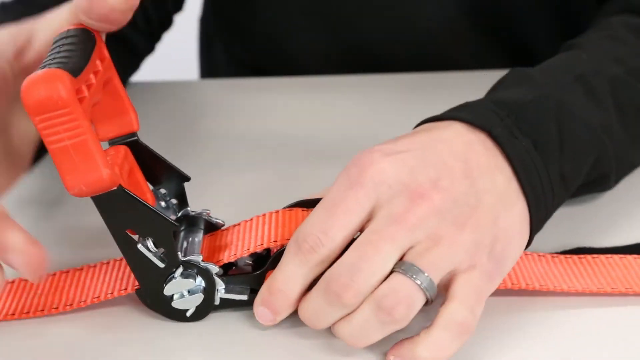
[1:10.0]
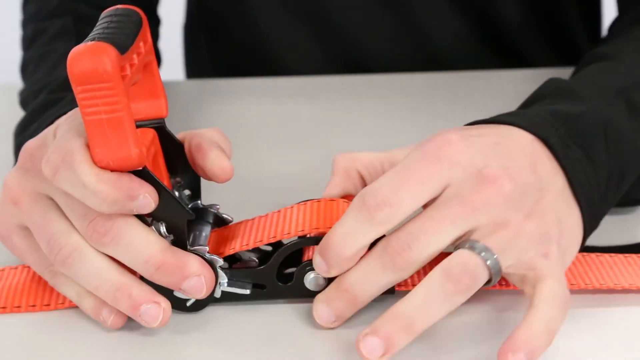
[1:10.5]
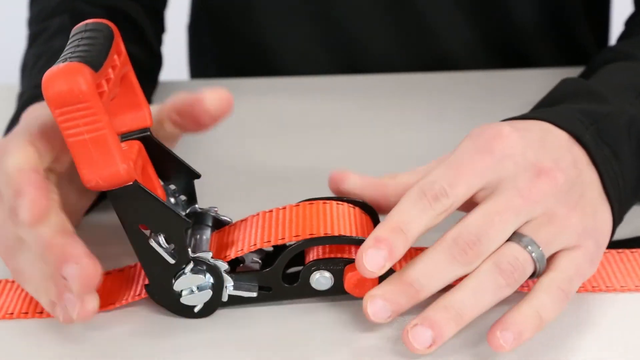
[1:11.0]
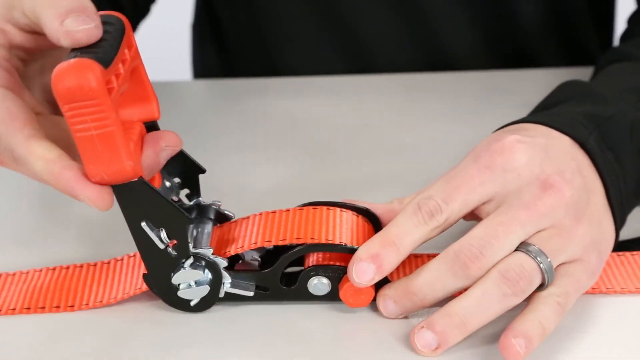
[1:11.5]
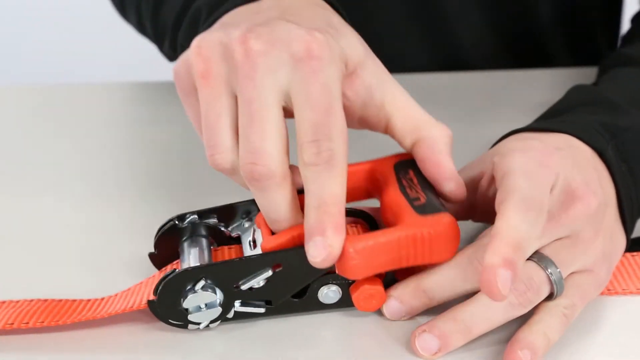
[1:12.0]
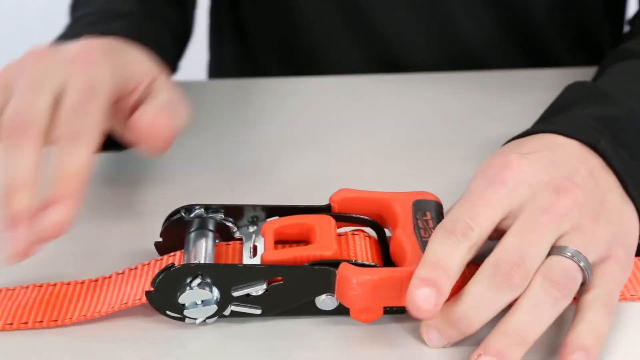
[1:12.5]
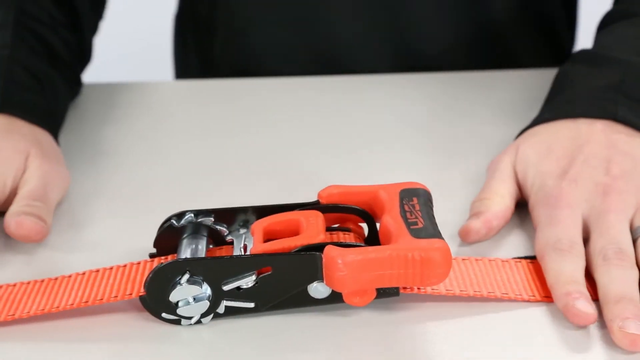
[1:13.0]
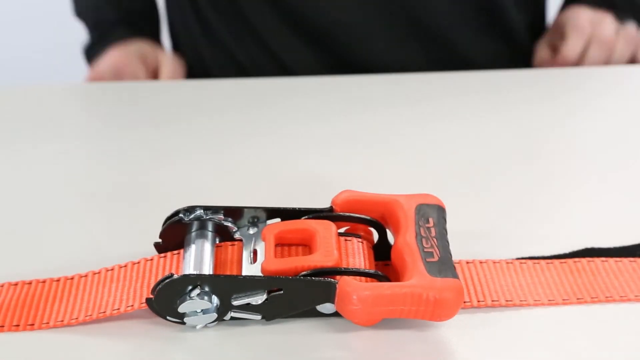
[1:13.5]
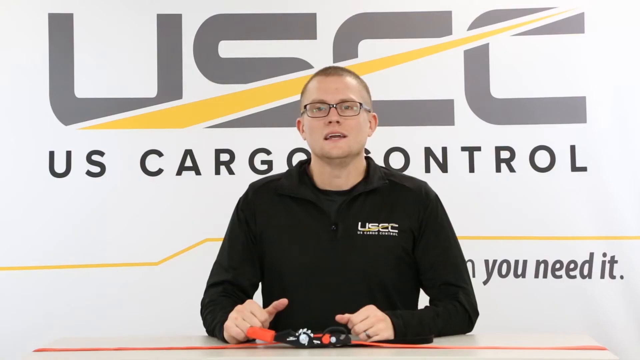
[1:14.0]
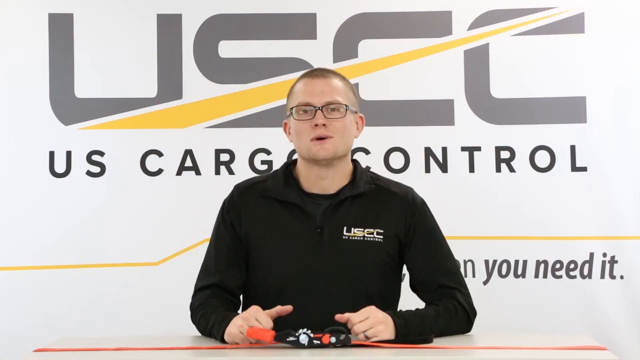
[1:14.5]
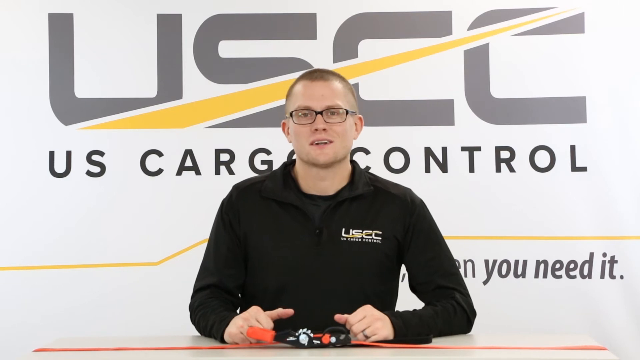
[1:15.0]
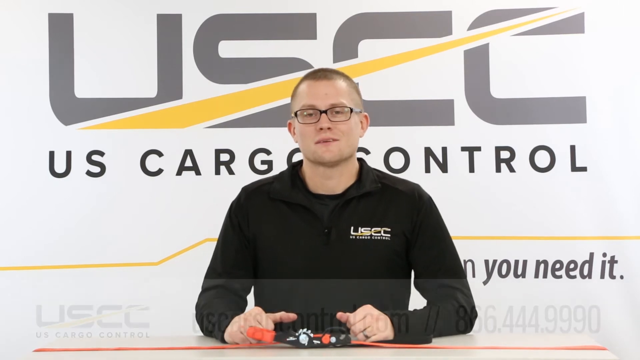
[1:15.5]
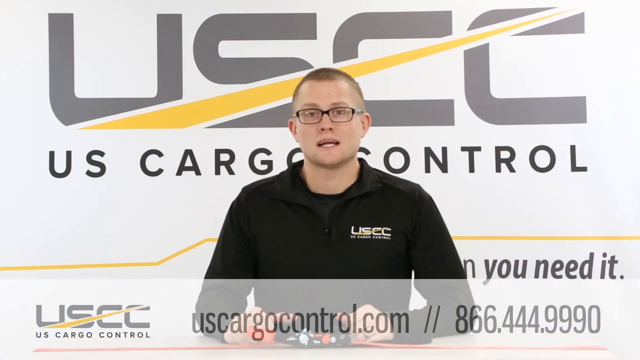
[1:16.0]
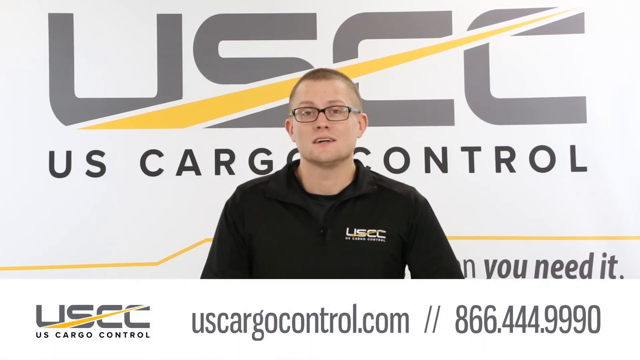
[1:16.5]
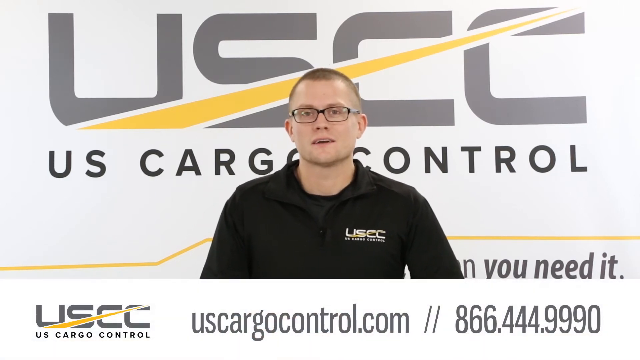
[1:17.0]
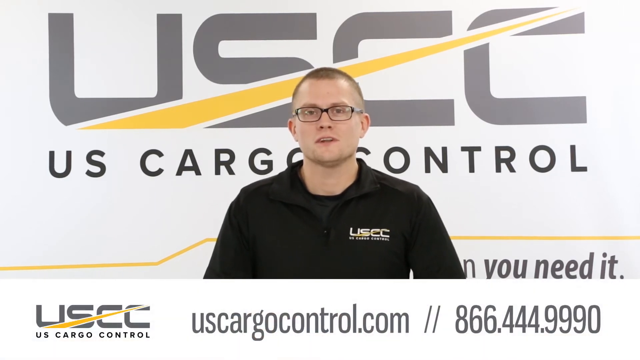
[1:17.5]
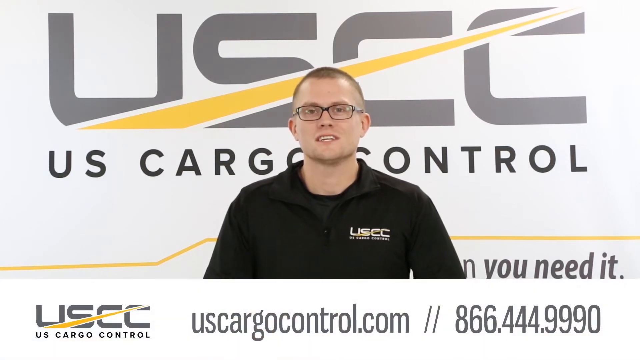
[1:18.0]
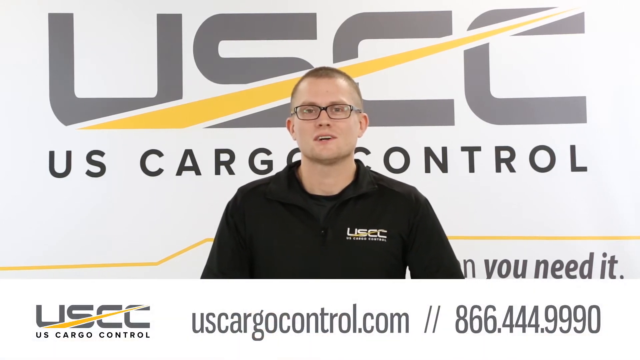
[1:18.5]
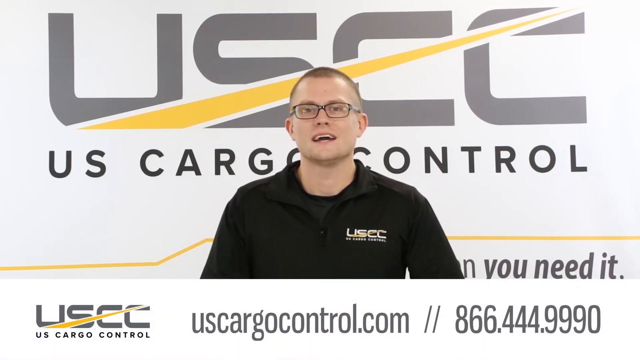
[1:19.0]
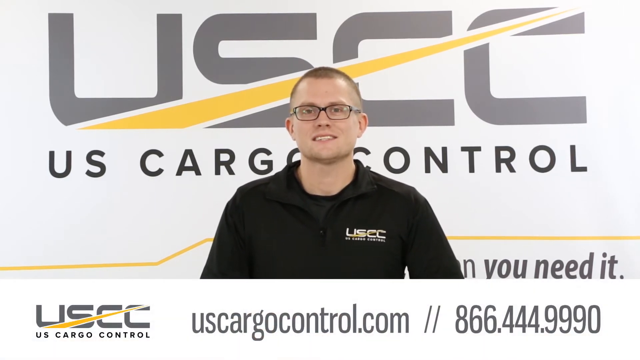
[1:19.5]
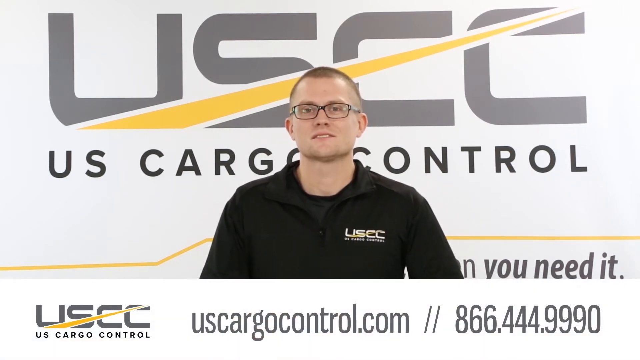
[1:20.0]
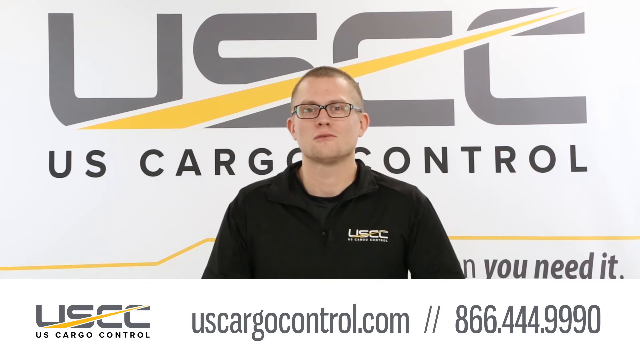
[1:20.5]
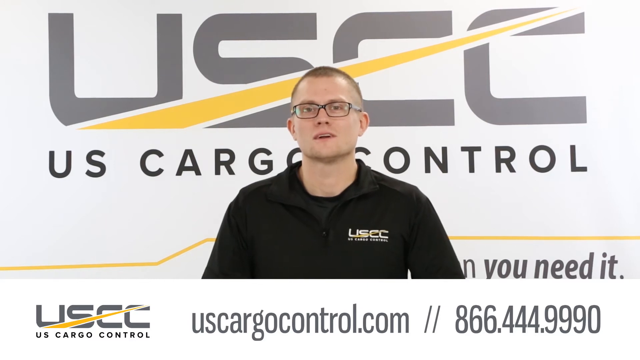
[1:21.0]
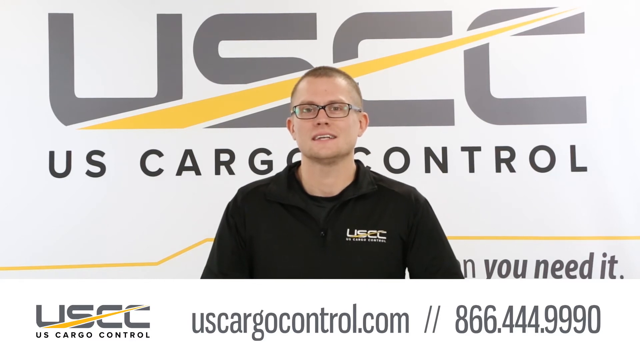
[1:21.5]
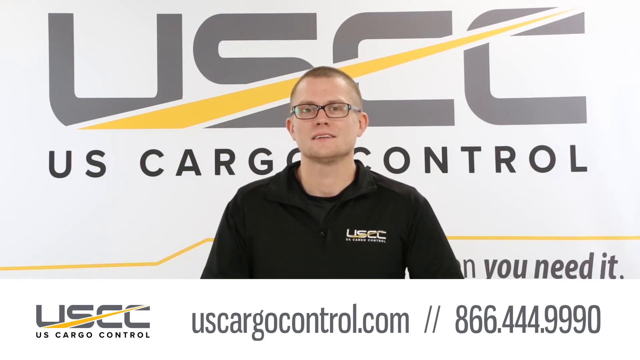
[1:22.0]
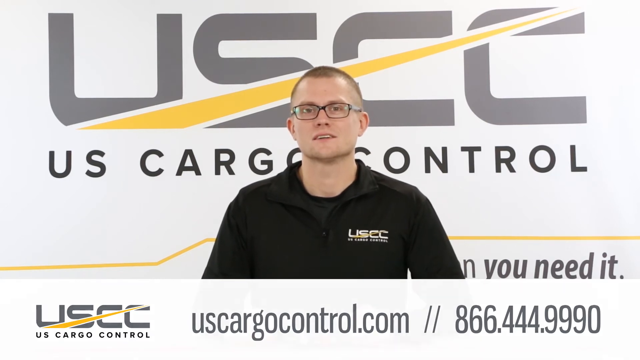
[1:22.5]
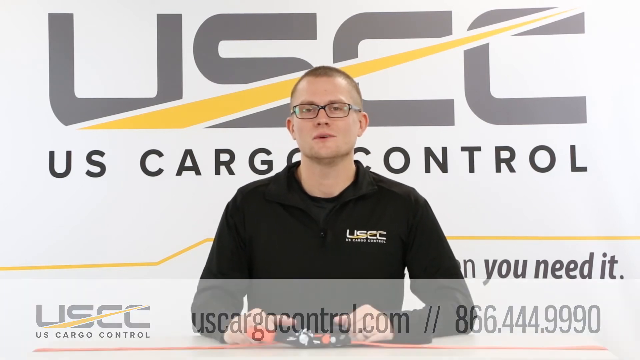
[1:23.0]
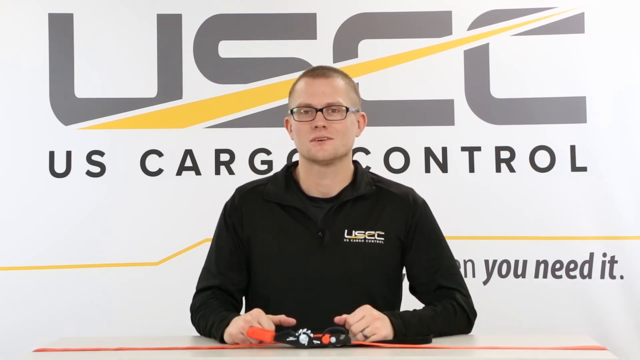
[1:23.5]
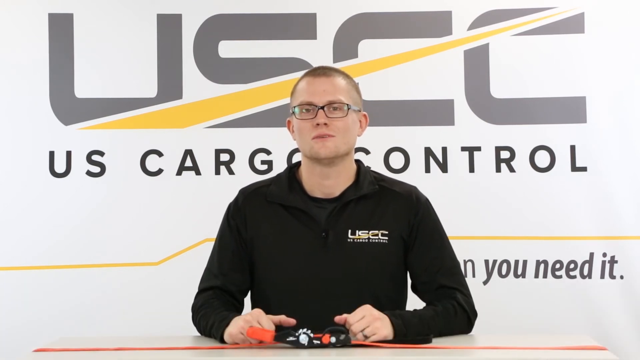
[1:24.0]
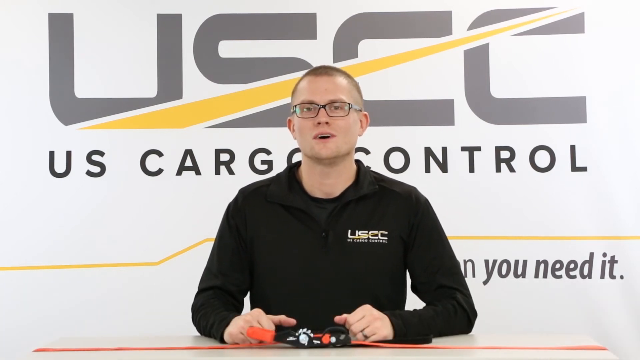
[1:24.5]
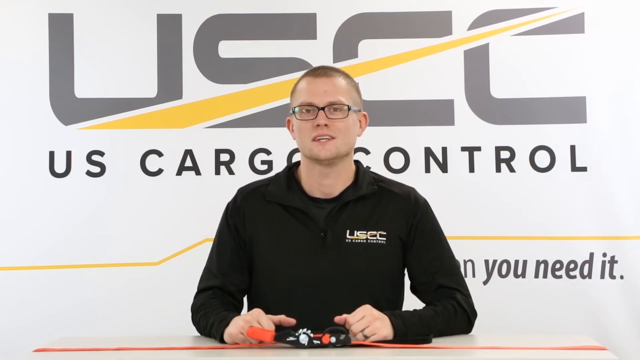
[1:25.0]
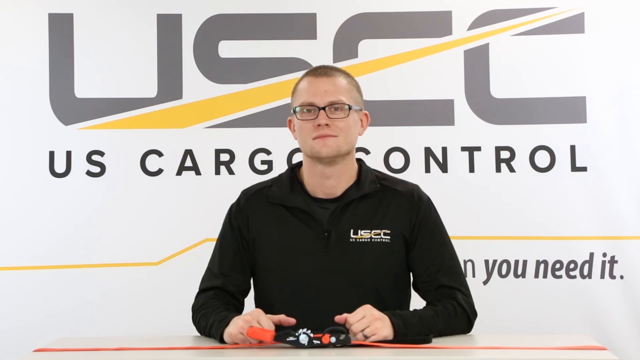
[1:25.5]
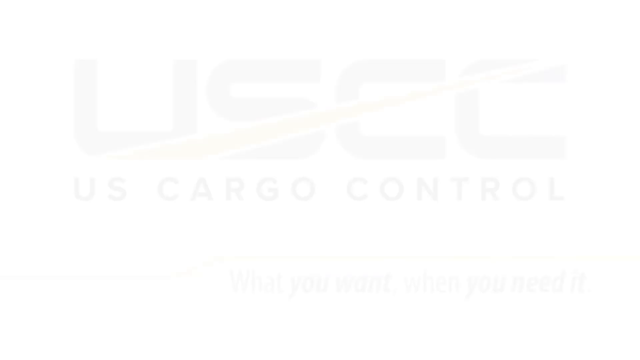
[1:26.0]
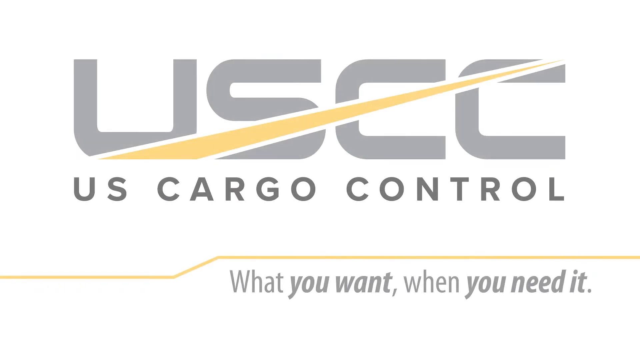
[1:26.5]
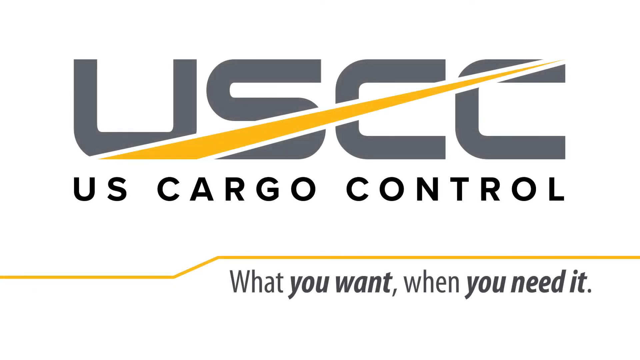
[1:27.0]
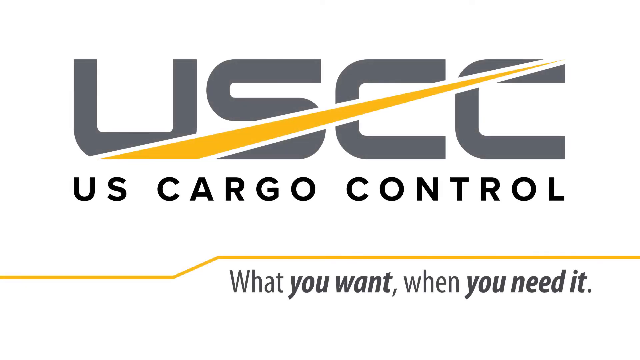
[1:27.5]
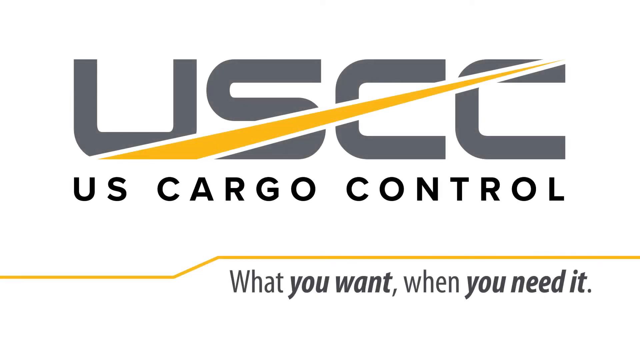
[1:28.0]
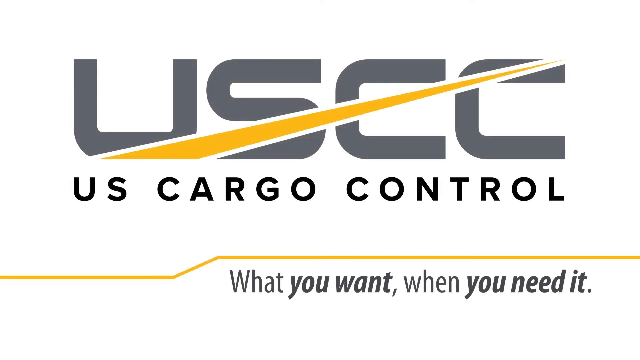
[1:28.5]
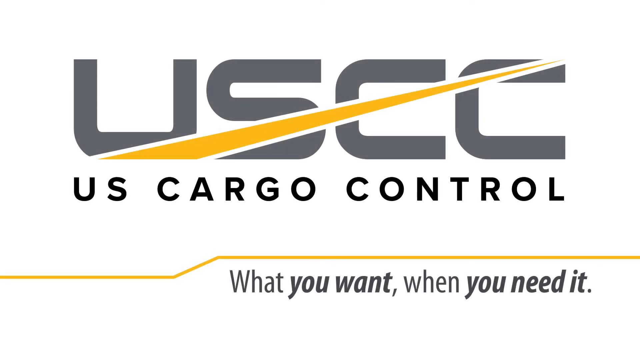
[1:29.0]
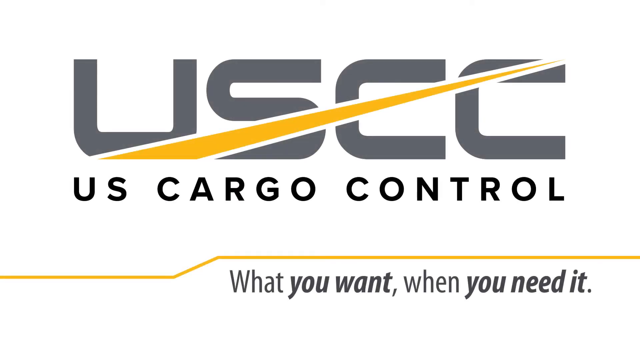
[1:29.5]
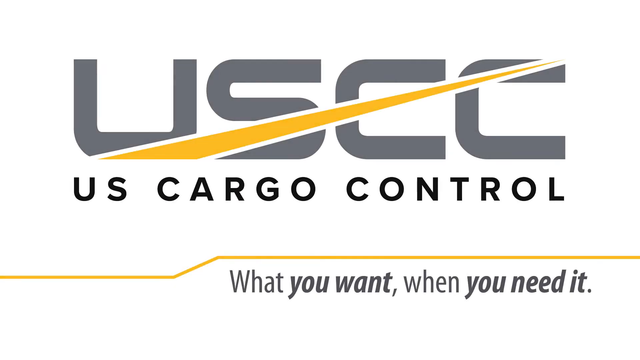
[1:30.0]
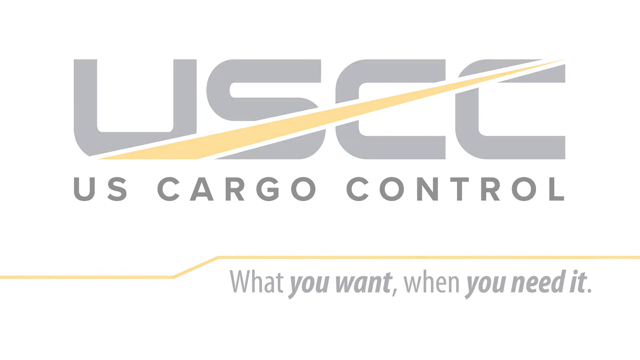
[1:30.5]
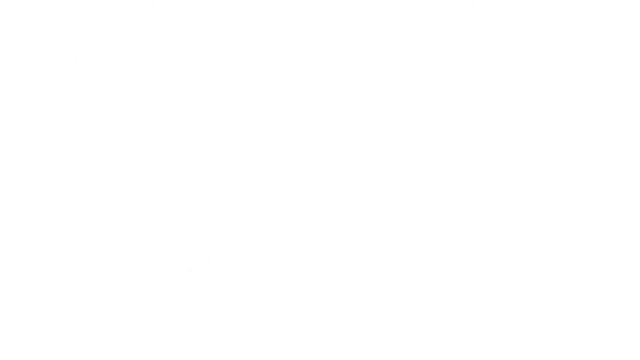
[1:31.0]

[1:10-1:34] The man closes the buckle and uses his flat hands to pull the strap on both sides of the buckle to tighten it. The view returns to the man behind the desk, with the strap and the buckle in the center on the desk in front of him, laid completely flat and stretched out, as he speaks to the camera. A white bar appears along the bottom of the frame, with the USCC, U.S. Cargo Control logo on the bottom left, the website "uscargocontrol.com" in the middle, and a phone number starting with 866 on the bottom right. The information bar then fades out and disappears. The man stops talking, and an ending card shows a very large USCC, U.S. Cargo Control logo at the top center and, at the bottom, the text "what you want when you need it" with a yellow line directly above it going across.